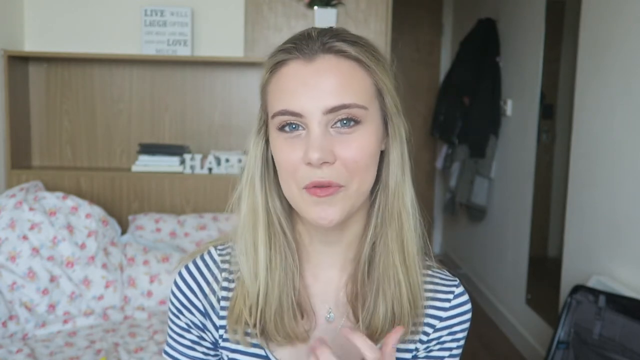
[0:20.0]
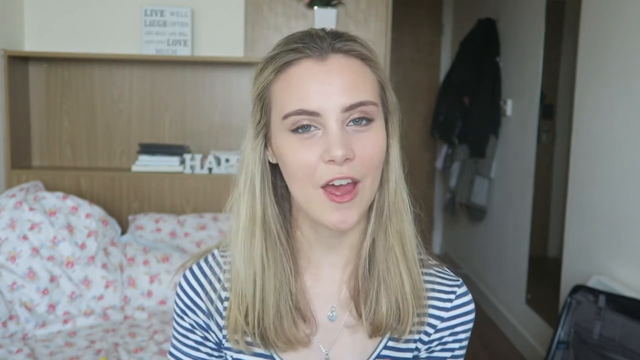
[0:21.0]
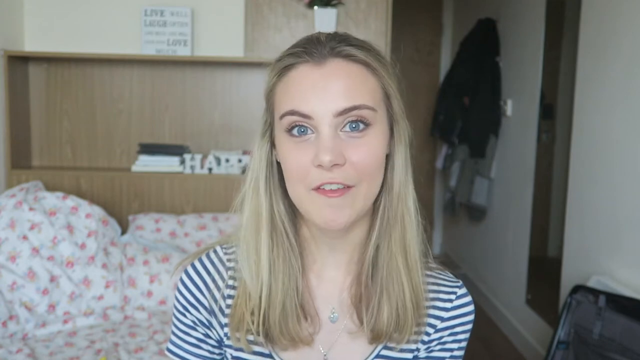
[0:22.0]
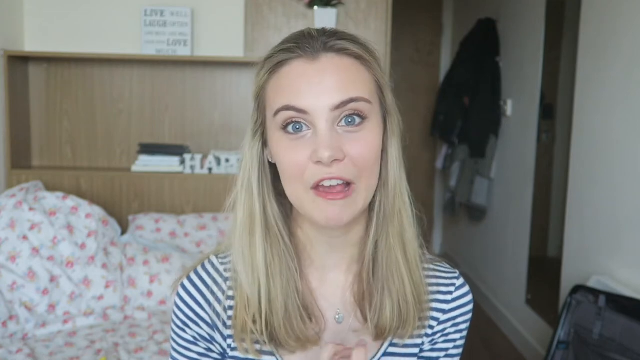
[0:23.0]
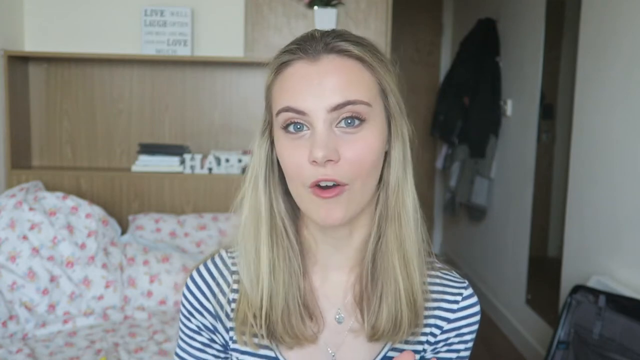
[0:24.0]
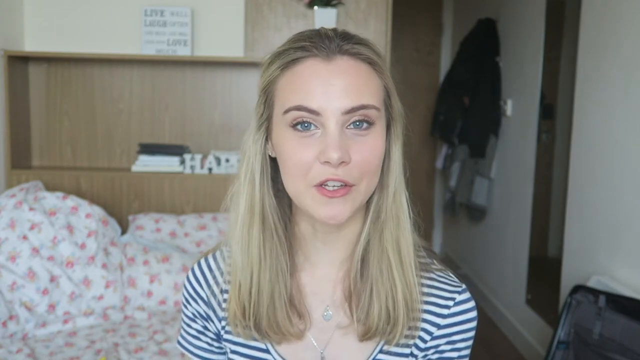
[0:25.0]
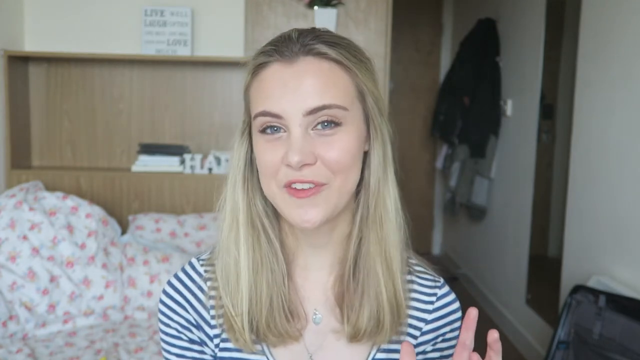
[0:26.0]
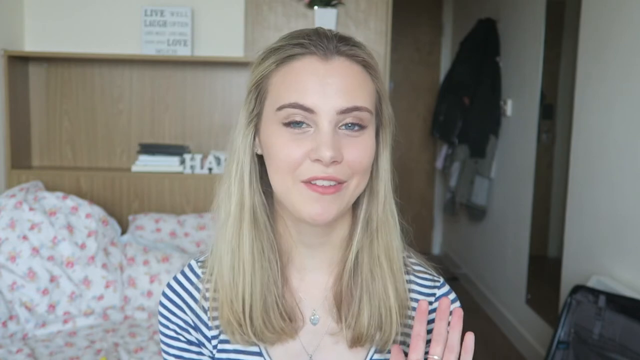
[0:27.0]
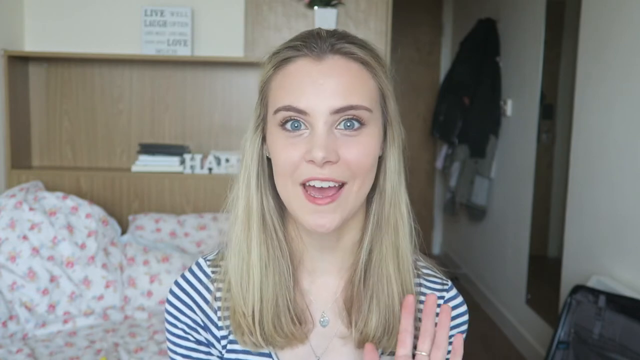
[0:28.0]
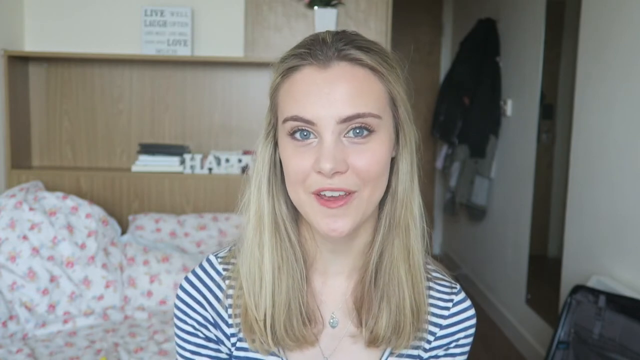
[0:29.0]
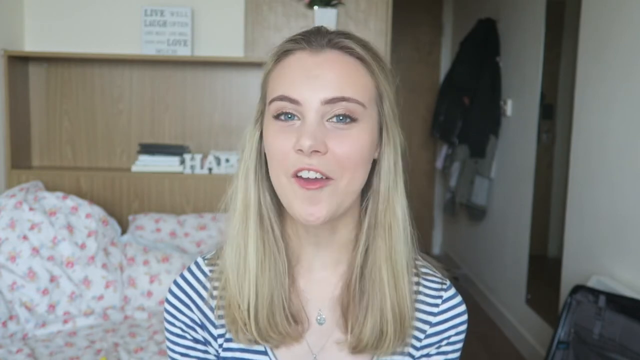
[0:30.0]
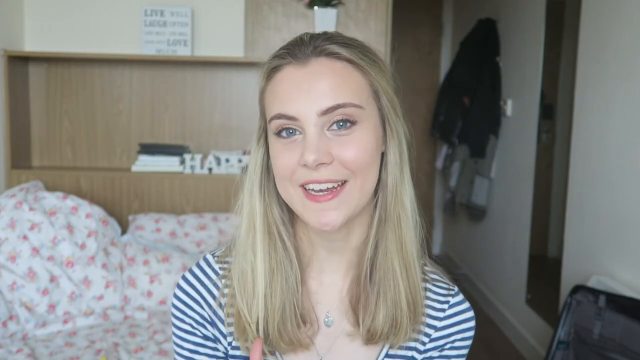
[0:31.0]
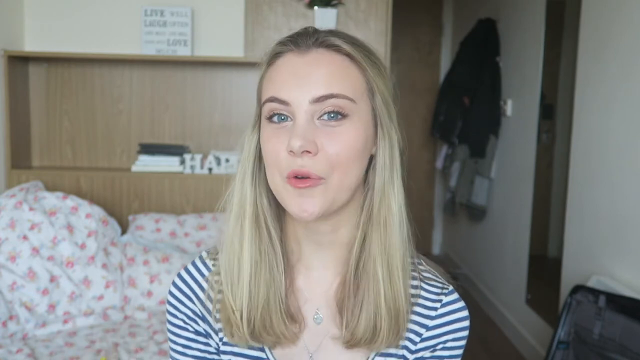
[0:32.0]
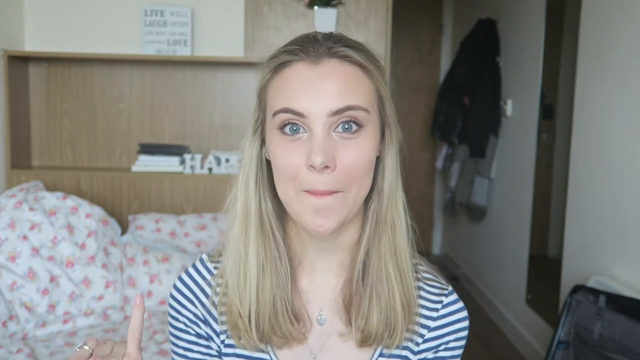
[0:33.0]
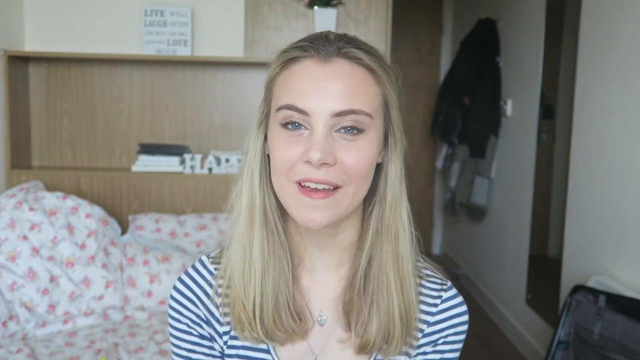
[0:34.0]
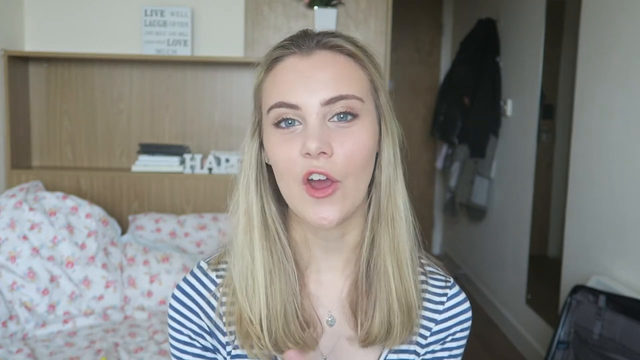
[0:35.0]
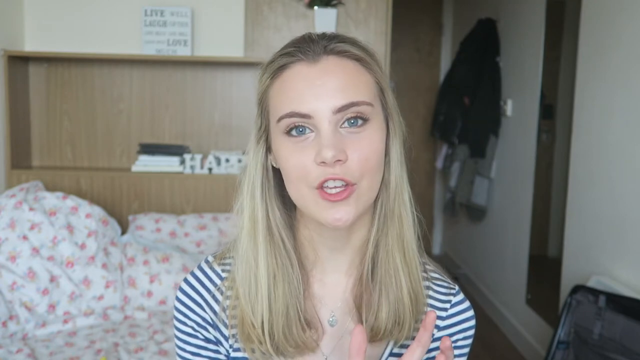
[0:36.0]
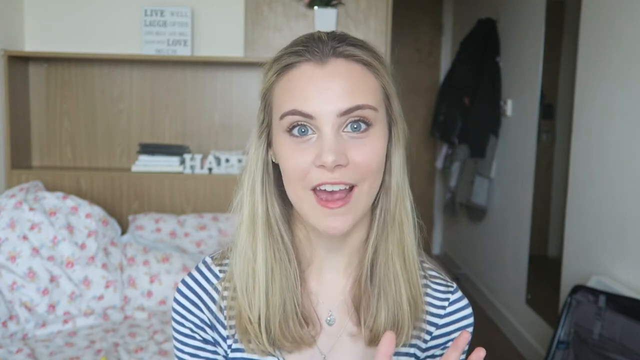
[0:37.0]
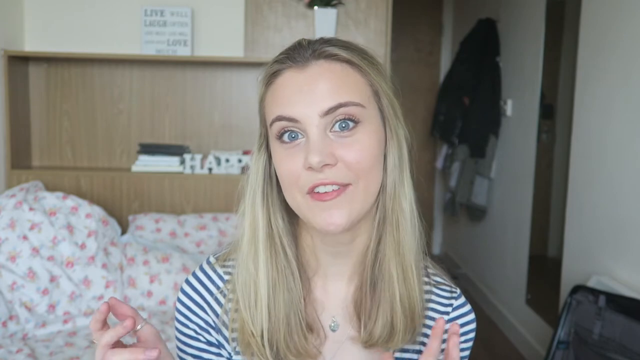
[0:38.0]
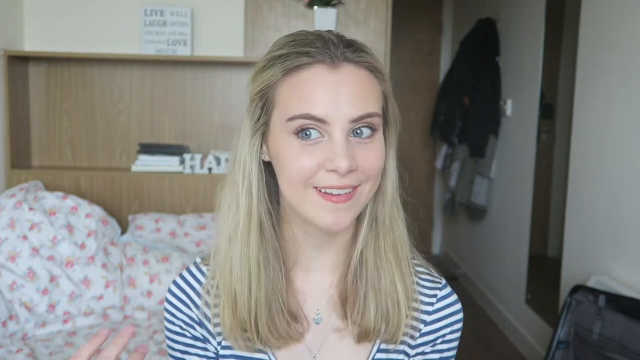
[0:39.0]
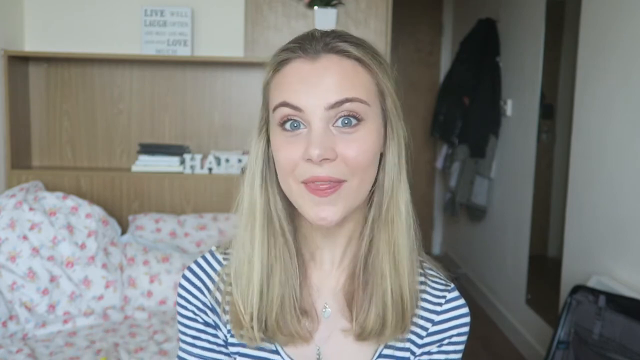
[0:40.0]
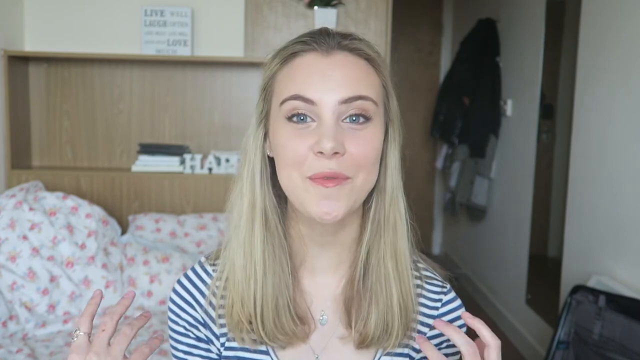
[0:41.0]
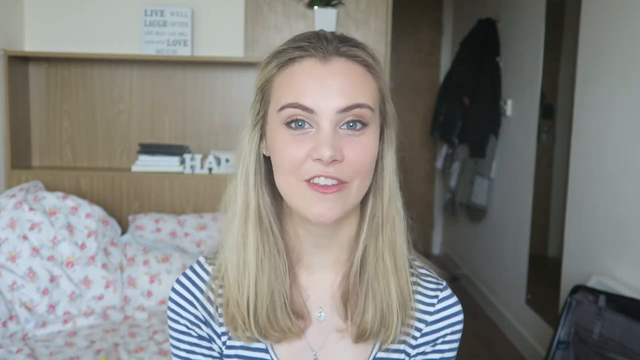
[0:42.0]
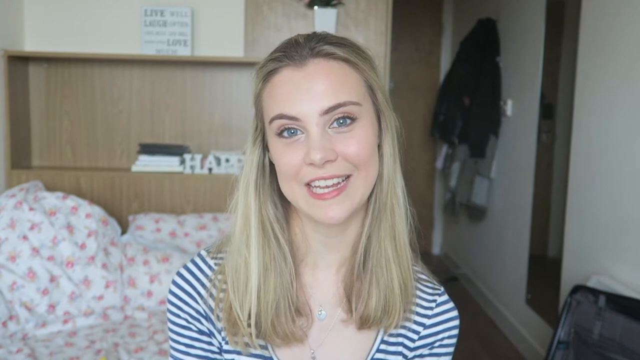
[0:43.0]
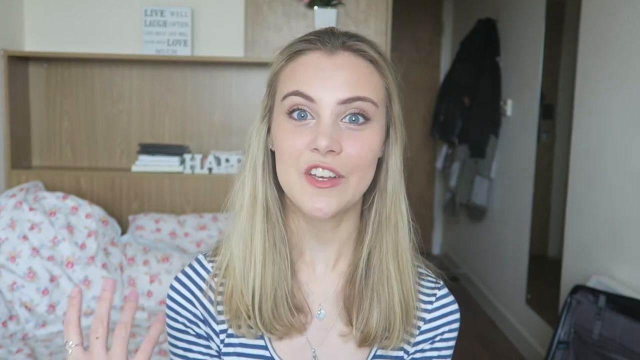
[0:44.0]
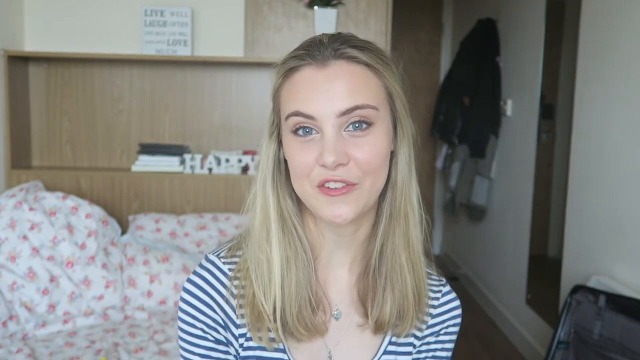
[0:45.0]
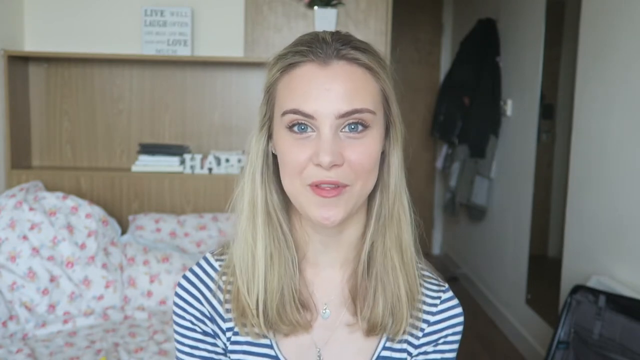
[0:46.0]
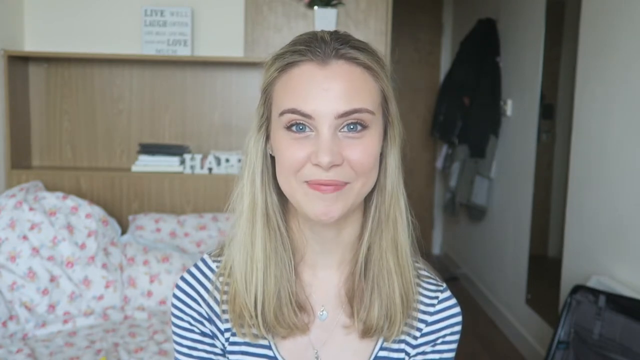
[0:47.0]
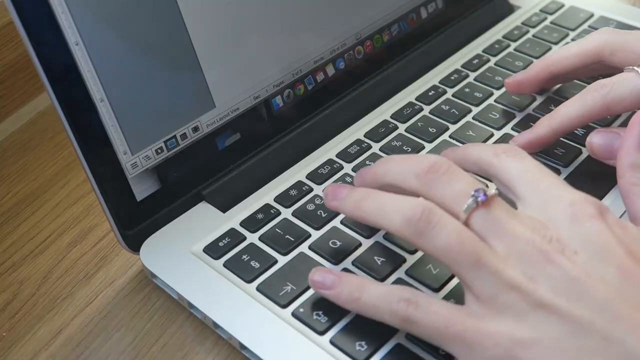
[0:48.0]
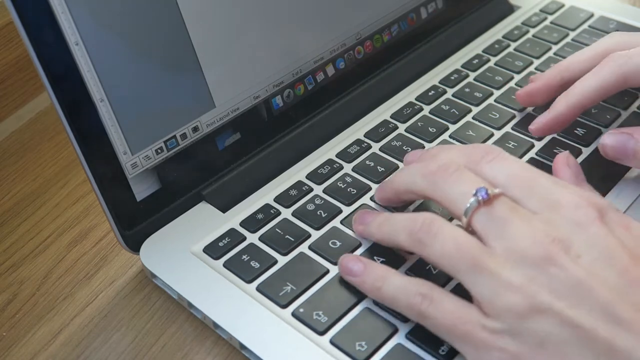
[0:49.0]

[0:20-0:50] The woman continues talking. She looks like she is a student and appears very happy and very animated. She occasionally gestures, holding up her right finger like a number one sign, moves her head quite a bit as she talks, and otherwise looks at the camera. Her mouth moves almost as if she has a lisp, and her bottom teeth are rarely visible. Her hair is blonde but a little darker at the roots. The view then switches to a close-up of someone typing on a laptop keyboard, with just the bottom left corner of the screen visible. The hands are Caucasian, with no apparent nail polish, and a small silver ring with a little purple gemstone in the middle is on the middle finger of the left hand as they type. The keyboard is silver with black keys bearing white letters and numbers. The laptop is angled and looks like it is on a wood desk of some sort, with light brown wood grain visible to the lower left.